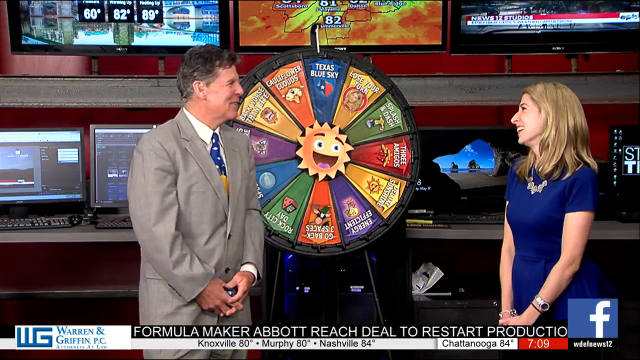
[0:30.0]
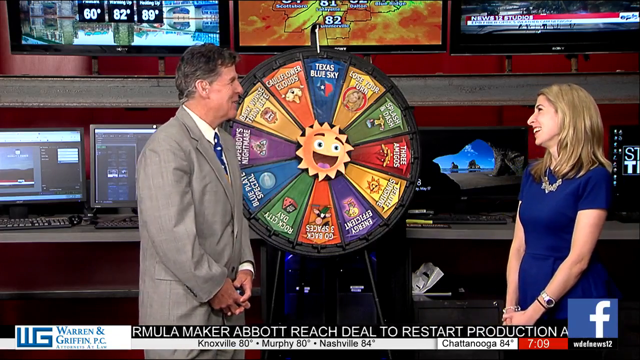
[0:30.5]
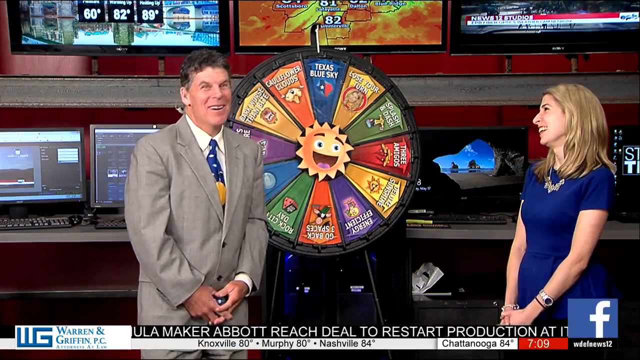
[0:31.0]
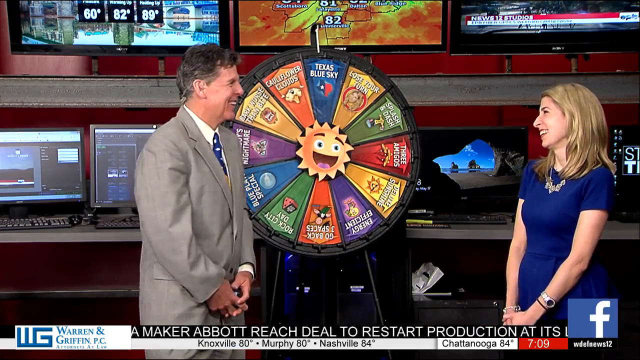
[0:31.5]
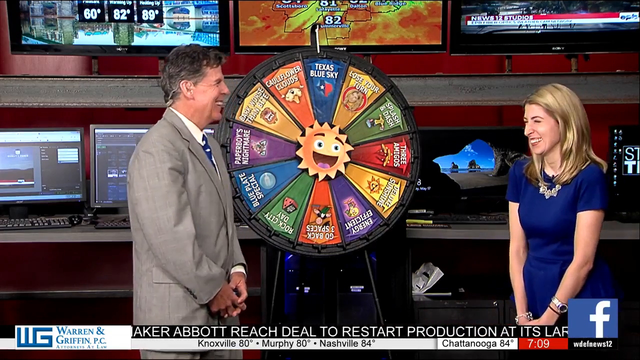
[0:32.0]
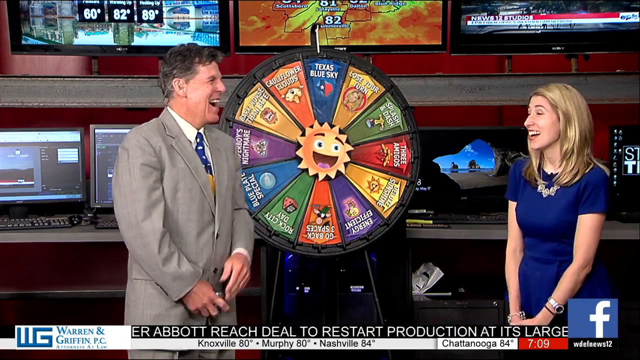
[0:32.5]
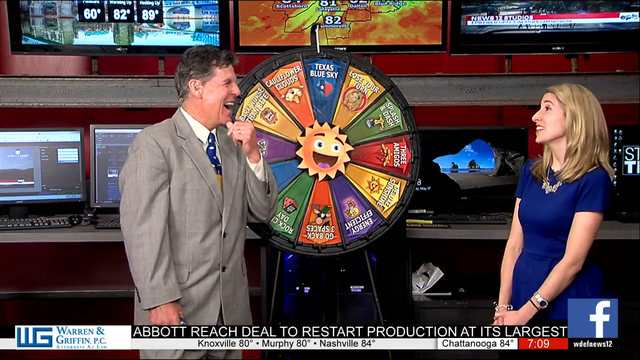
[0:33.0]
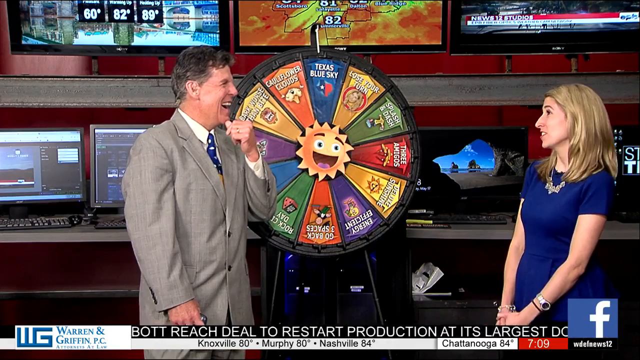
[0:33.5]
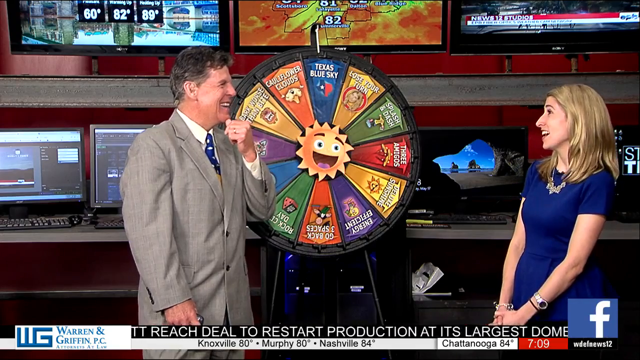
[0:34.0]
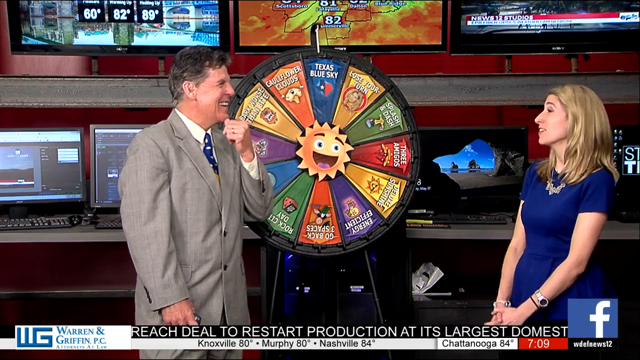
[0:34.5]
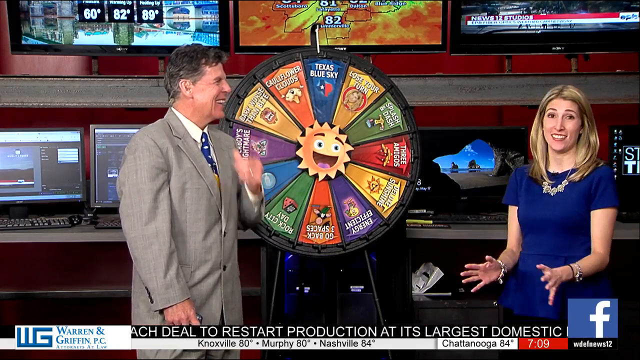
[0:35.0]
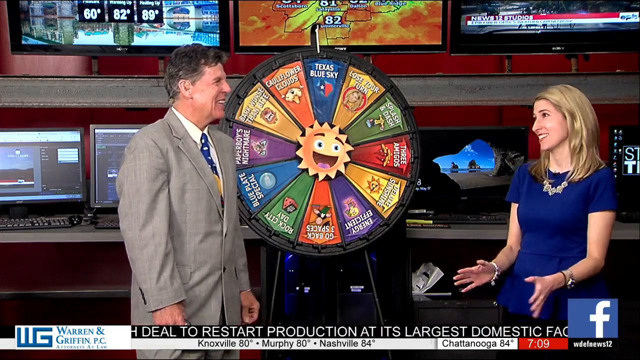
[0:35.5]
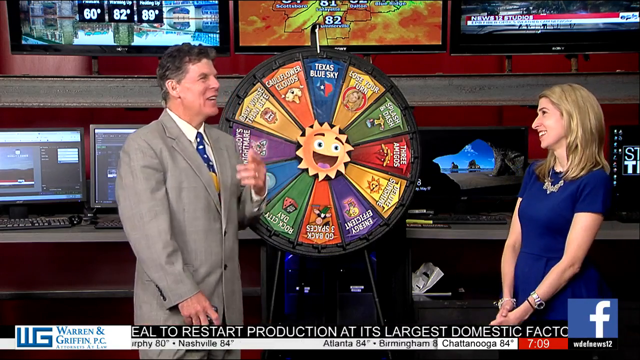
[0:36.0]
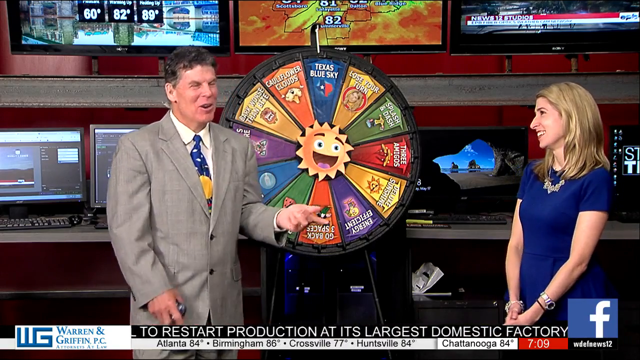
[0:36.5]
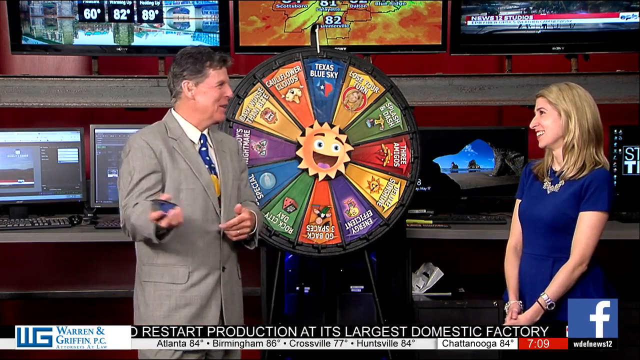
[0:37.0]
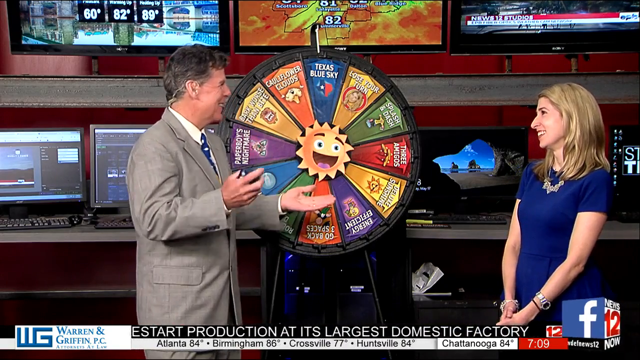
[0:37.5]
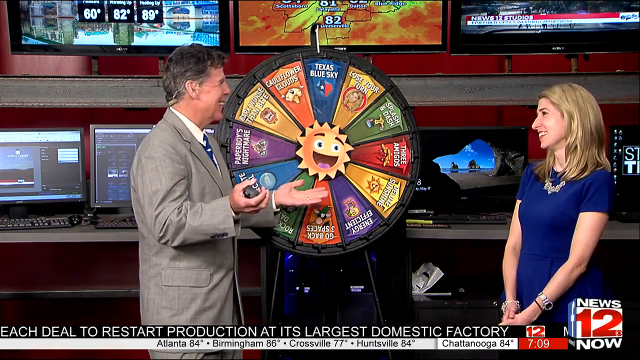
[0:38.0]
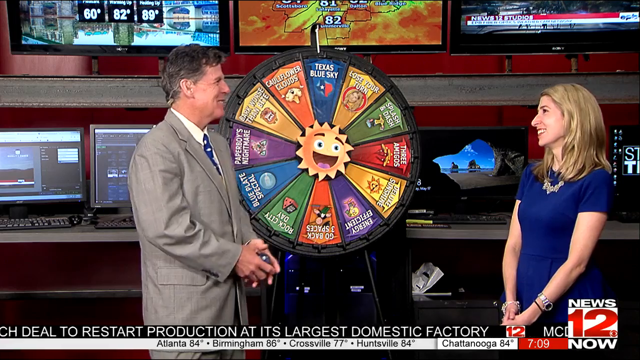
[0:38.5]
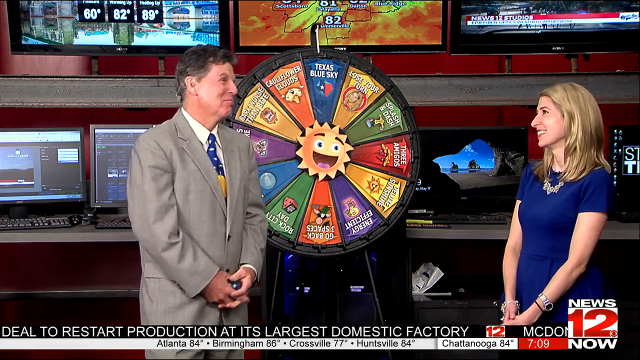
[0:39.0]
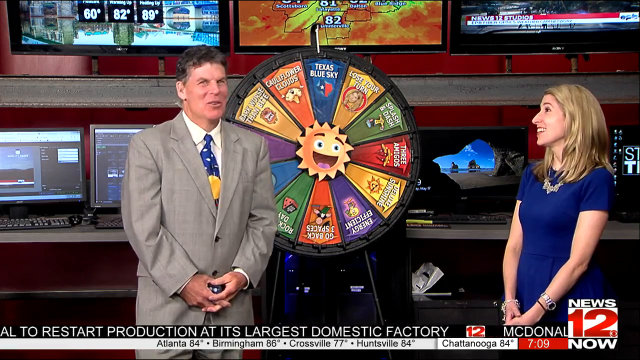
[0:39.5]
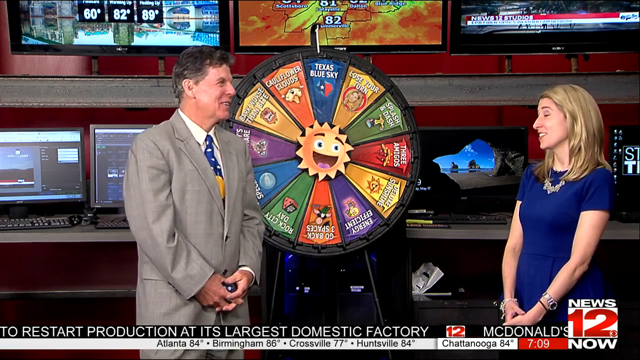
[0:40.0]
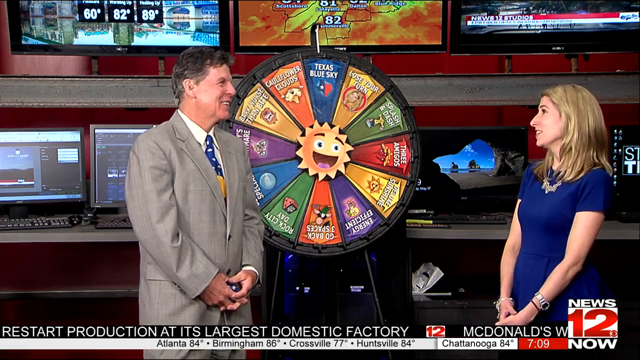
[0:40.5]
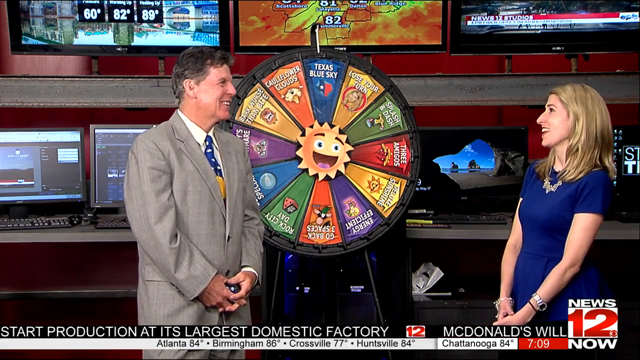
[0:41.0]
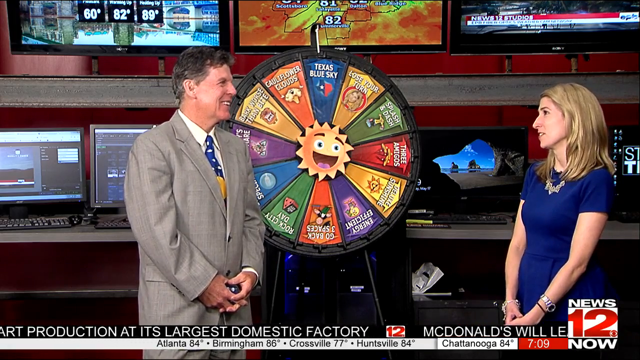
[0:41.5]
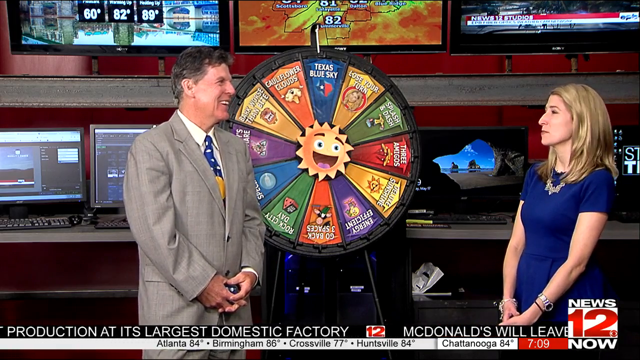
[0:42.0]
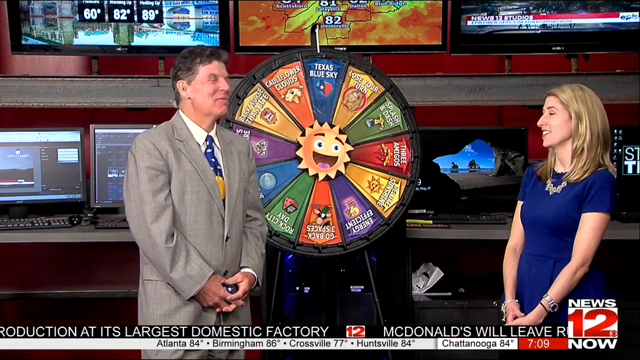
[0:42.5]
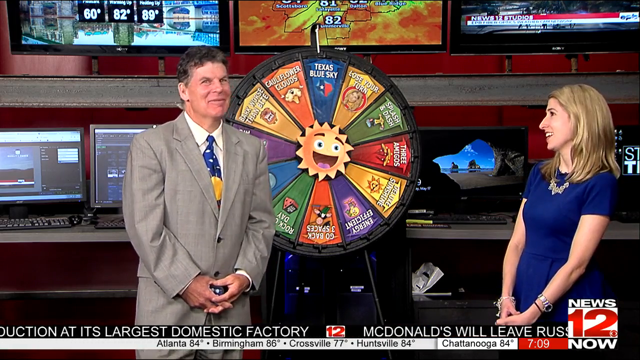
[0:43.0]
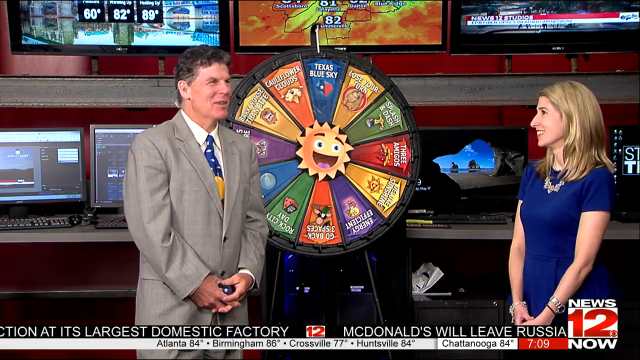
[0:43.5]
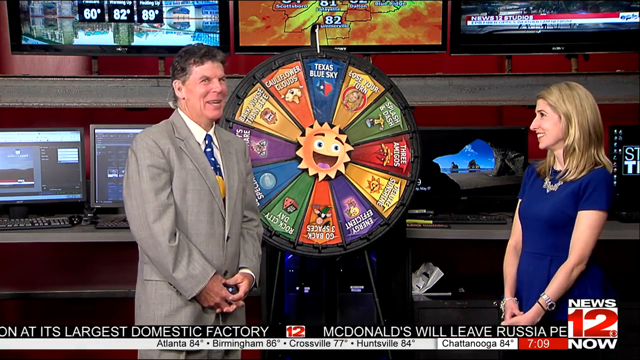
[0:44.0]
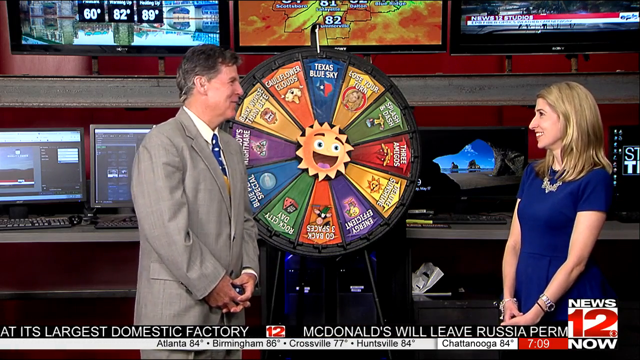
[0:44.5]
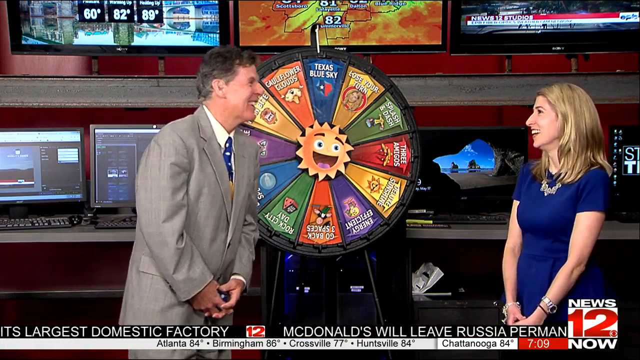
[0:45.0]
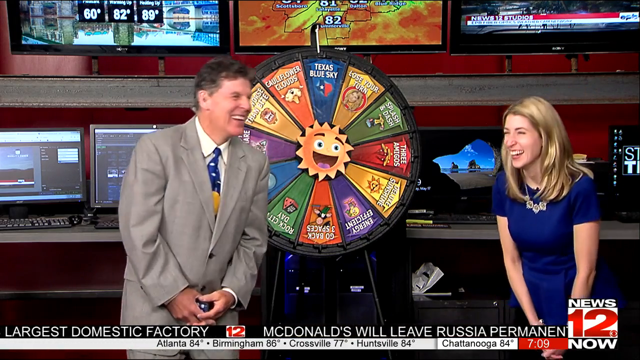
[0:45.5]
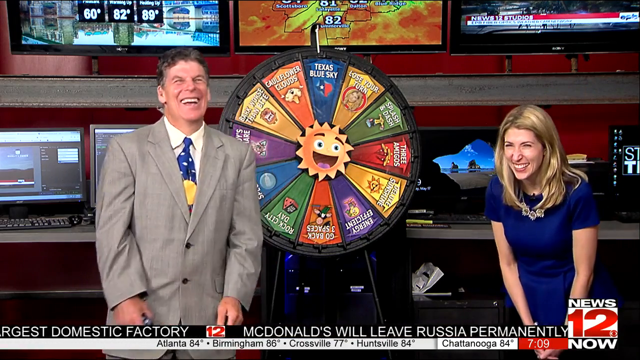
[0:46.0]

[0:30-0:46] The woman in the blue dress and the gentleman in the suit and tie continue speaking to one another, exchanging laughter and smiles. The news ticker at the bottom scrolls slightly from left to right, revealing unrelated news information. The gentleman gestures with his hands while holding a remote control in his right hand. Behind them are several computers, monitors and televisions, one of which shows the Windows 10 login screen. A weather-based wheel behind them shows different weather scenarios such as Texas blue sky or cauliflower clouds, with a happy, silly, smiling sun in the center of the wheel. A Facebook logo is in the bottom right.